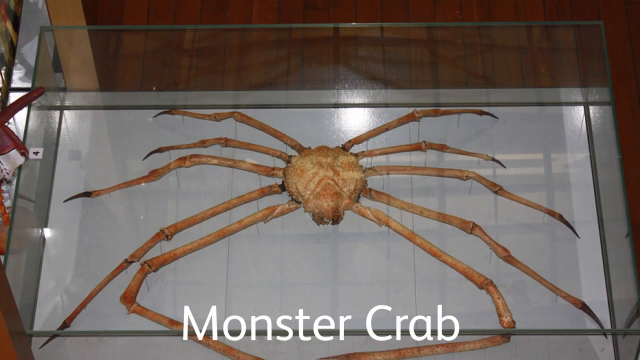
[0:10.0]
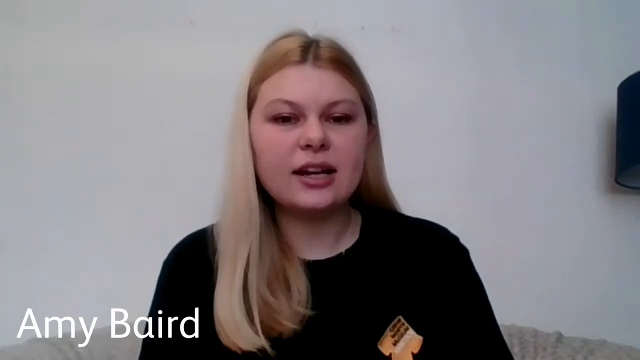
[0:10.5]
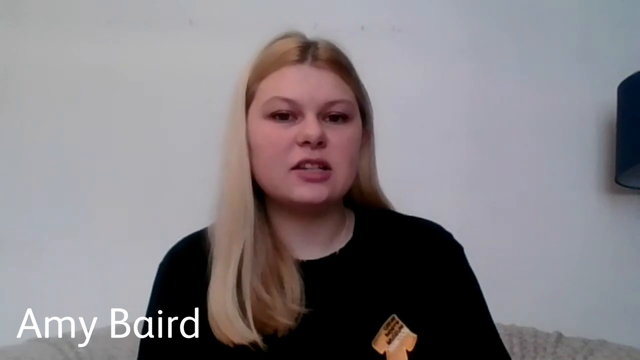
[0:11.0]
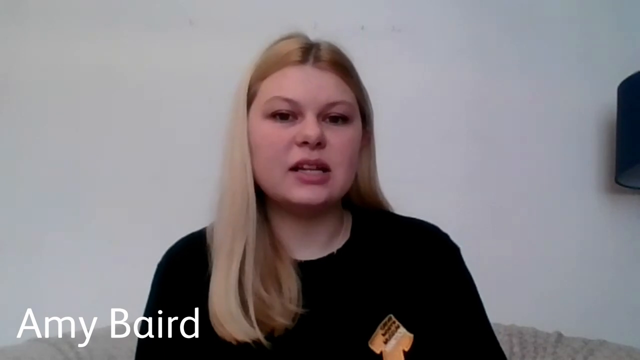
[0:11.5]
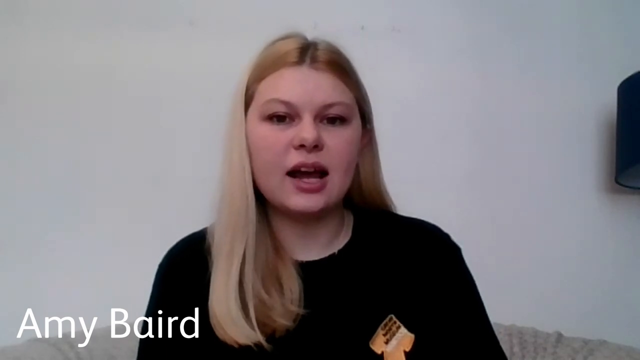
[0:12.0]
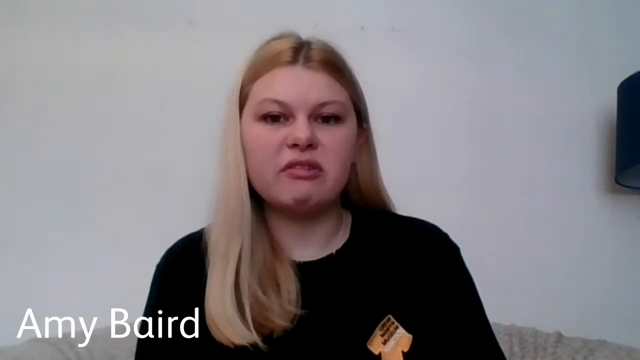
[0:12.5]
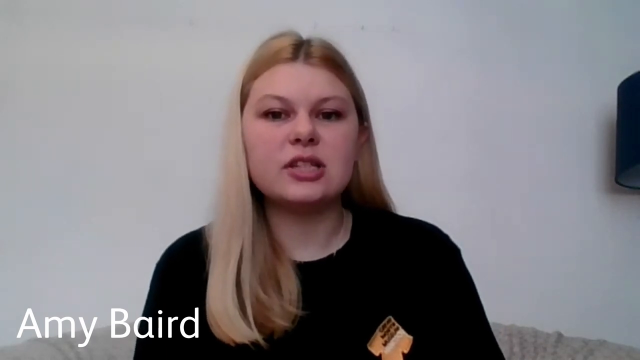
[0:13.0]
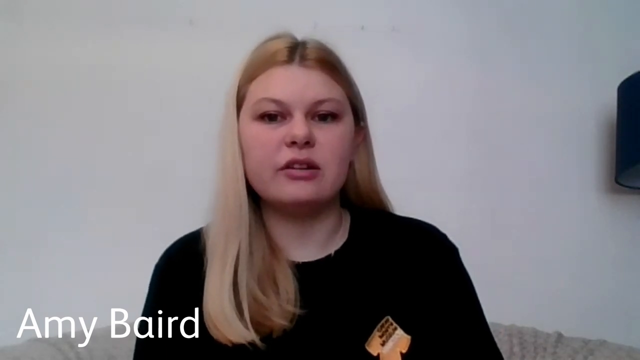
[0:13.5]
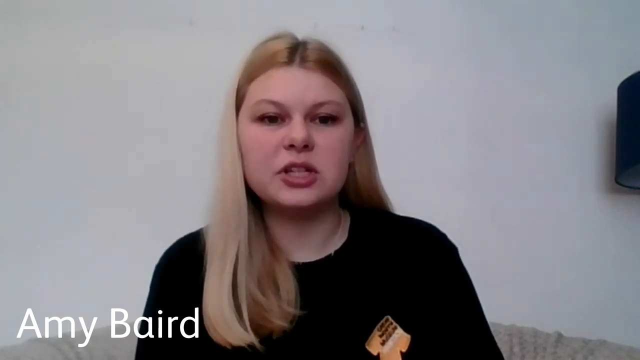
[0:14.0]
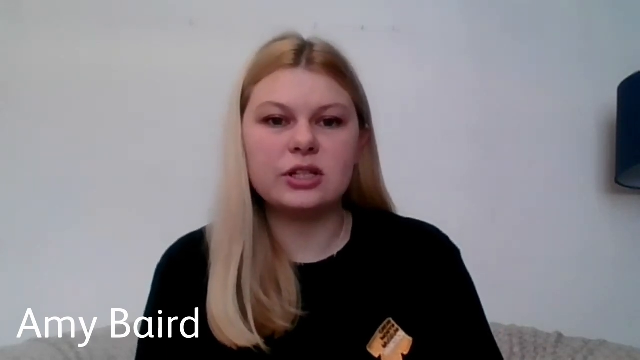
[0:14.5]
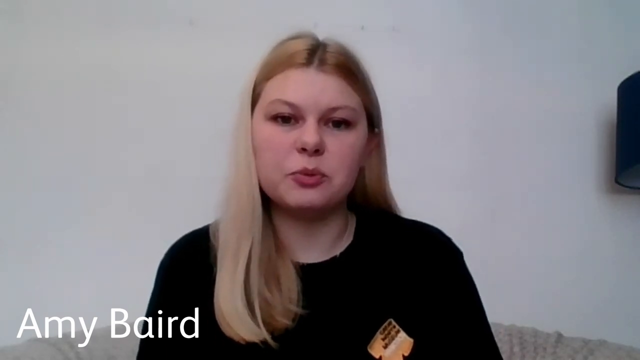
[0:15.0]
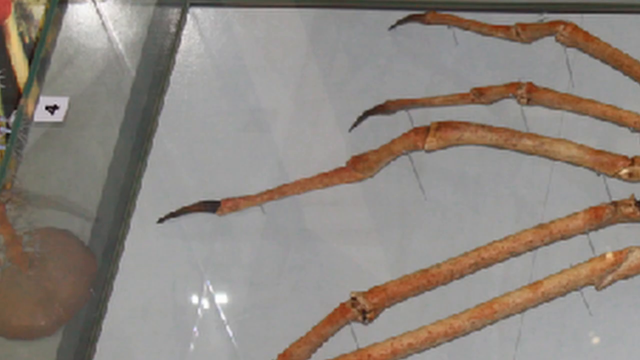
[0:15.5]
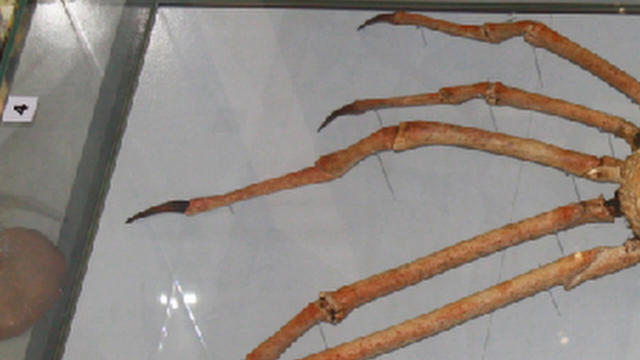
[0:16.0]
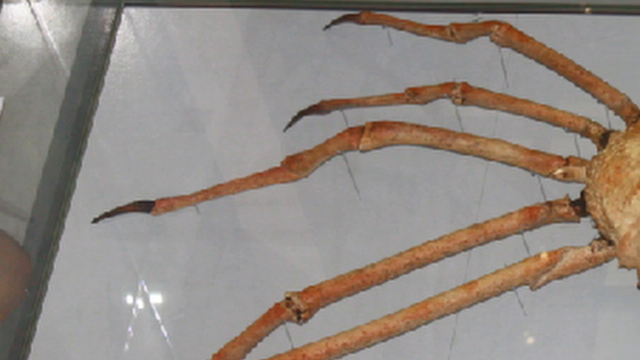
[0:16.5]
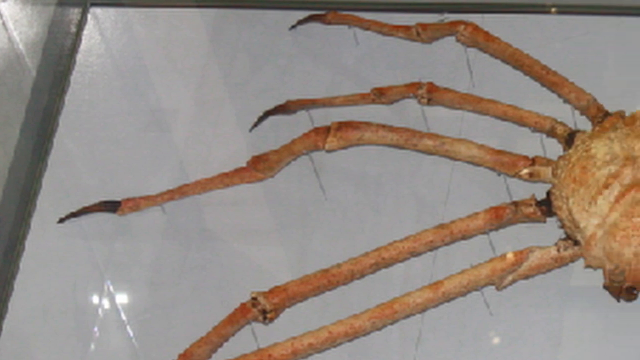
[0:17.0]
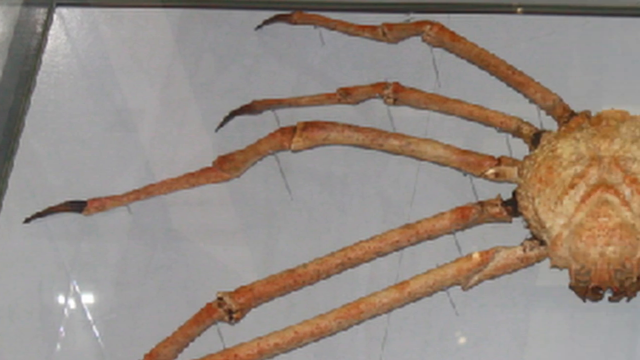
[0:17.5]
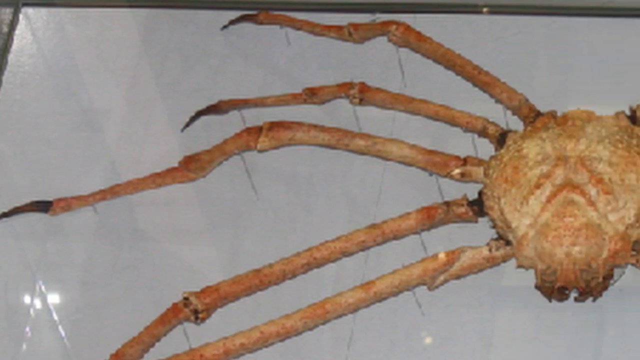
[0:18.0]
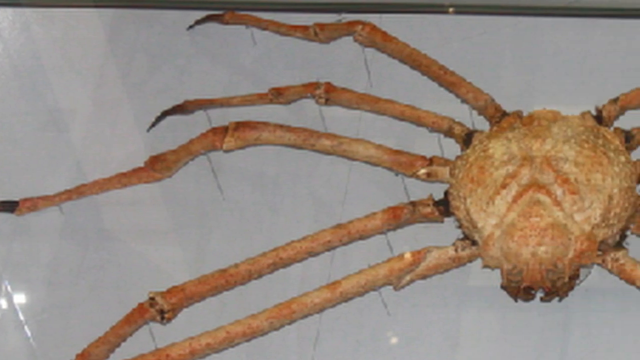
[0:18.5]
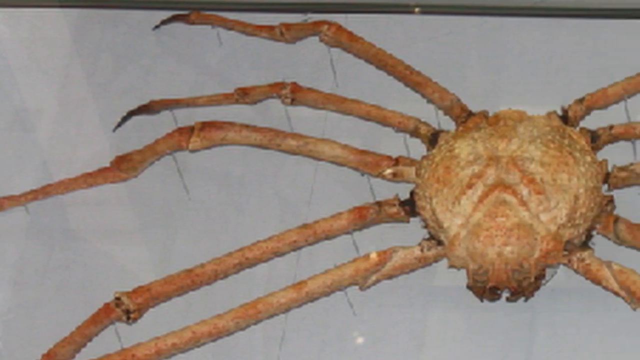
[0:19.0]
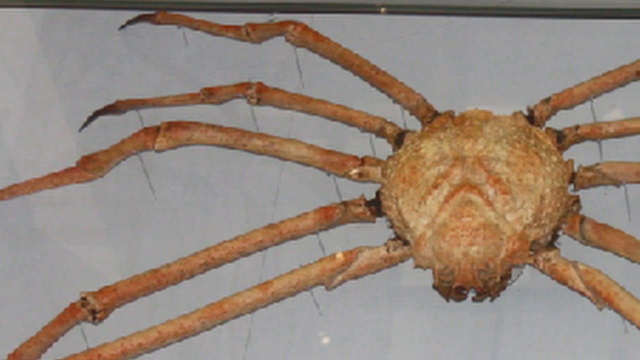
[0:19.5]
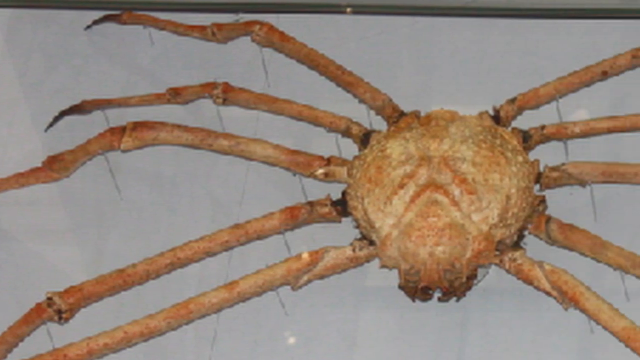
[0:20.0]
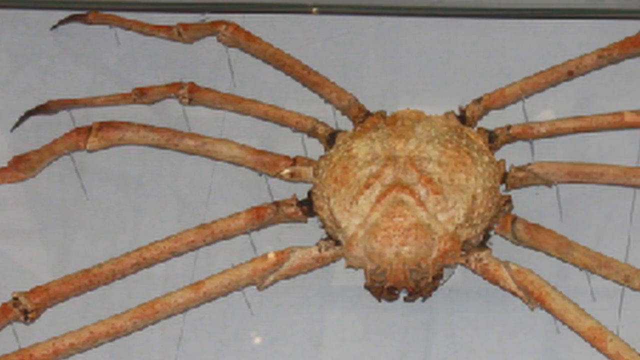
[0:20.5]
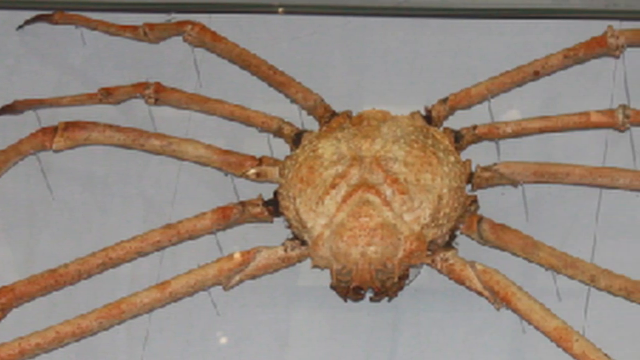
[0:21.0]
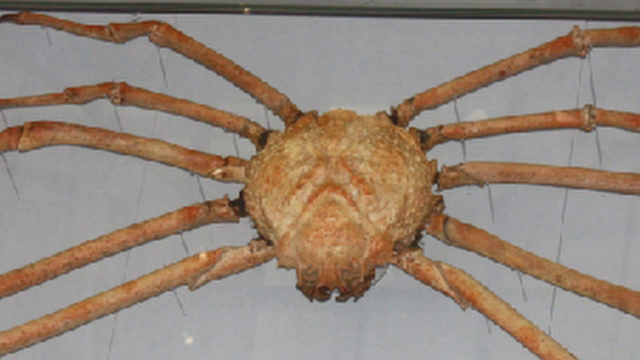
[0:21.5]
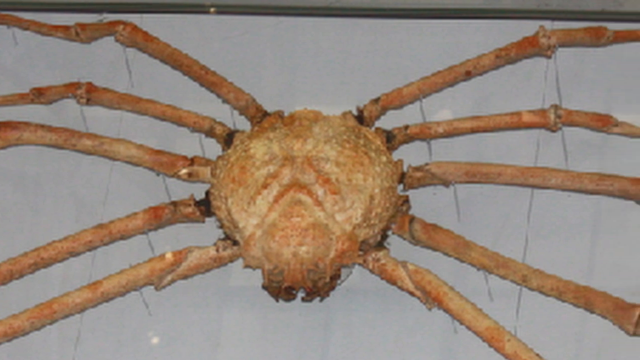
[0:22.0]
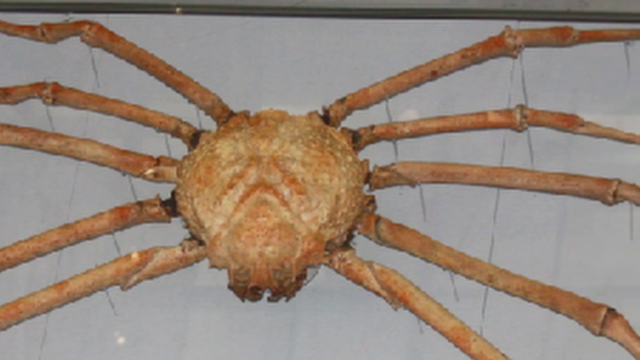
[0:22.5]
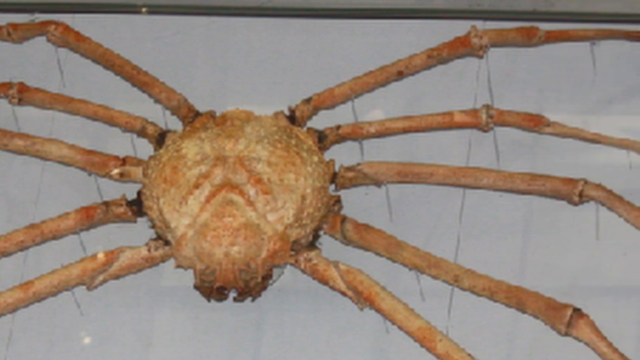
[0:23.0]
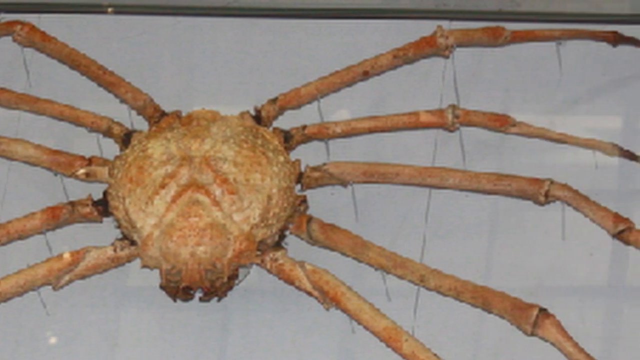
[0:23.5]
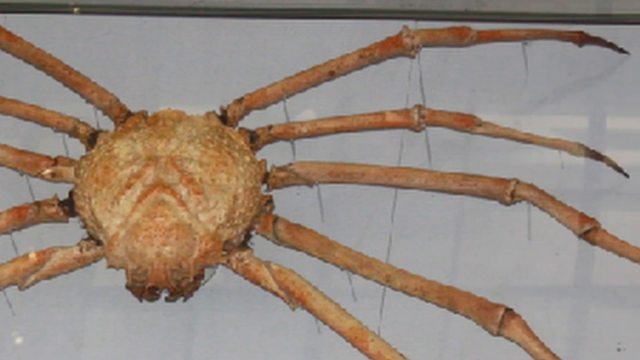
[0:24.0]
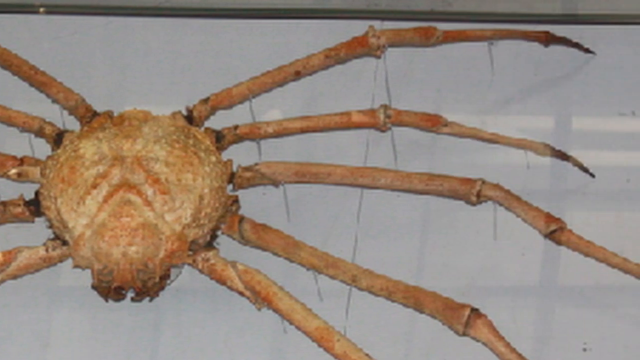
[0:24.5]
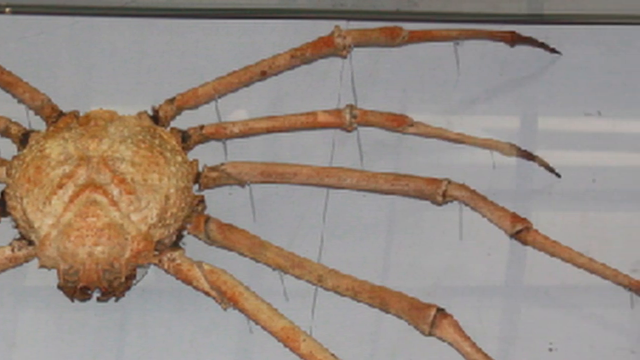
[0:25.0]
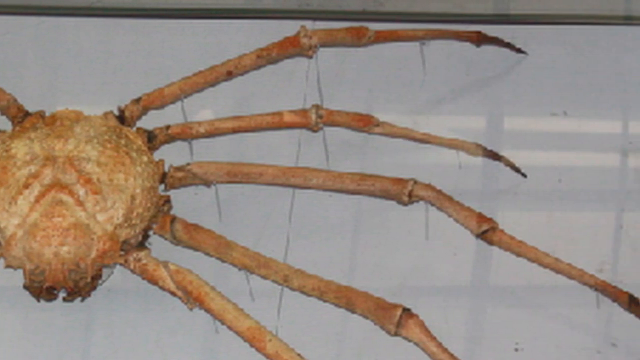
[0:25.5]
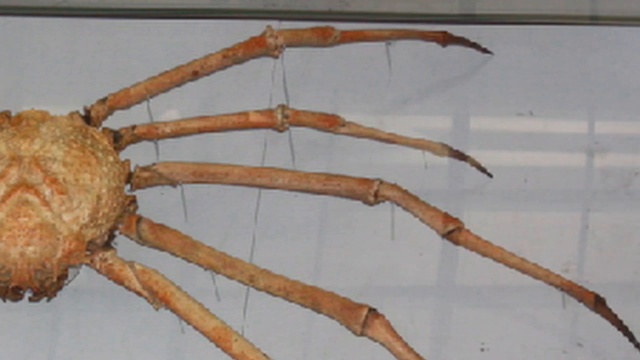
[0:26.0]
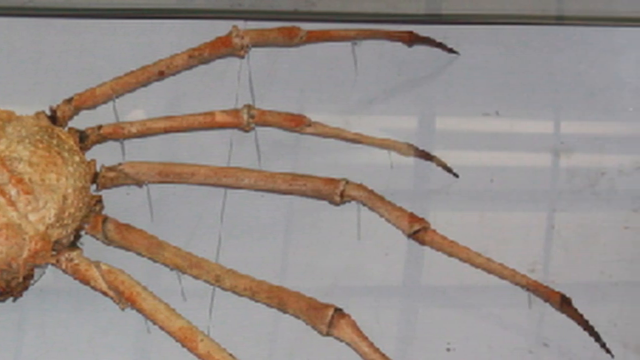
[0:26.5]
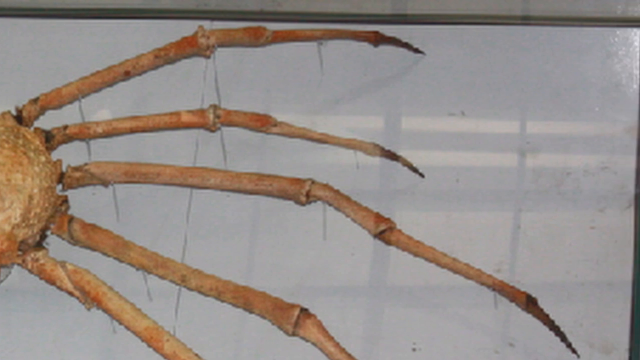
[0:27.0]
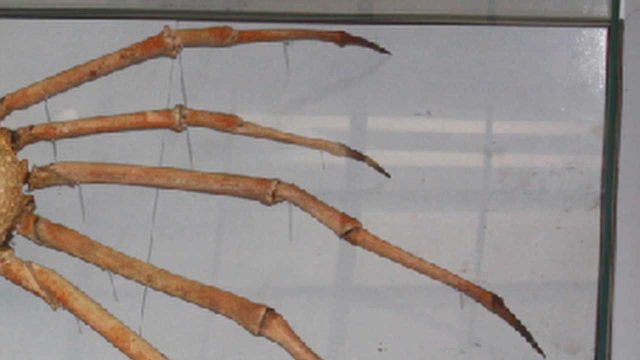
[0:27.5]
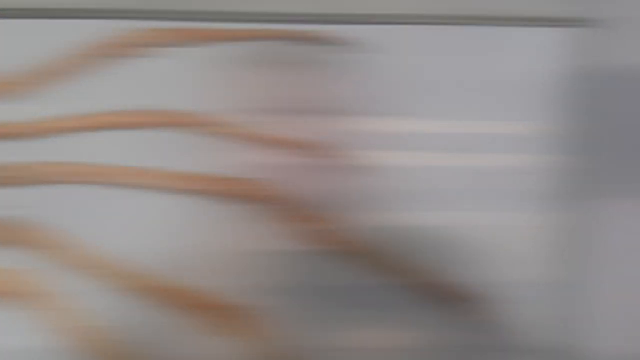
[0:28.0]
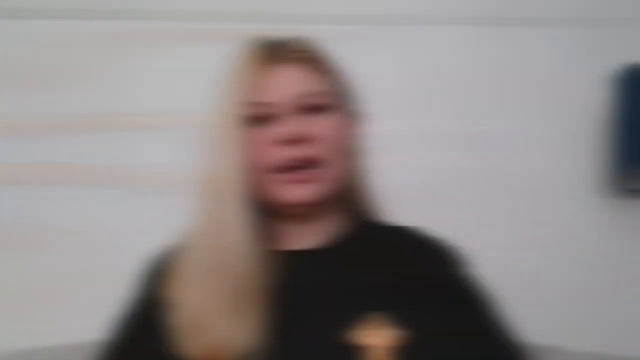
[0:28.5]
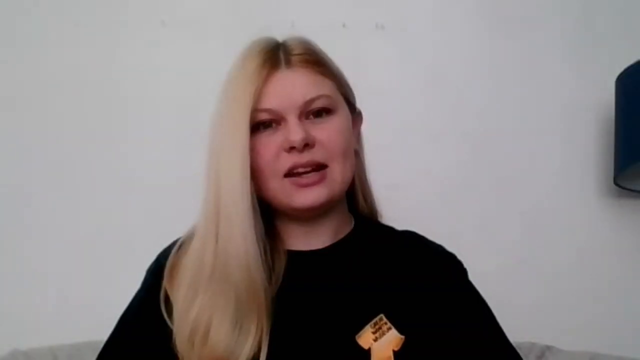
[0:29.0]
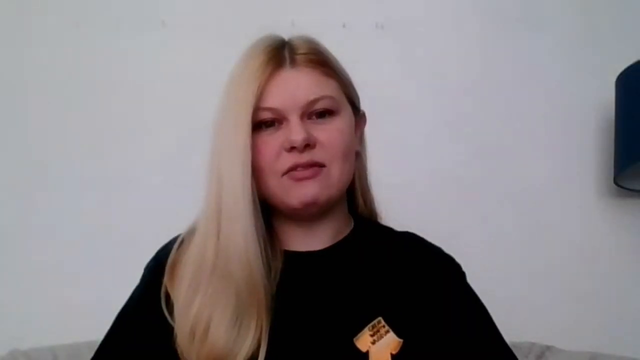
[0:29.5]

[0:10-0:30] The camera zooms into the crab and then zooms out. The shot switches to a fair-skinned woman with long blonde hair parted in the middle; part of her hair comes over her shoulder on her right side and the other part is behind her back. She wears a black sweater and is talking. The video returns to the crab, which is a pinkish peach and looks like it has fingernail claws. The camera moves from right to left, showing the crab from one side to the other. The woman is shown talking again. The crab is in a glass case, apparently for show or museum purposes, in a museum with what looks like a hardwood floor behind it. The glass case has a white bottom.